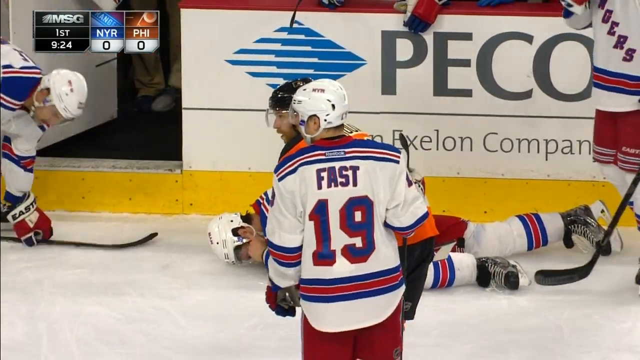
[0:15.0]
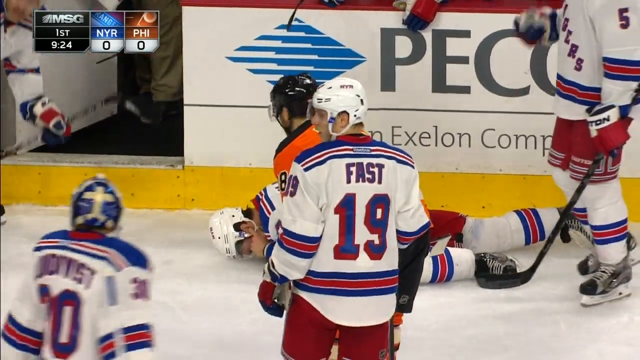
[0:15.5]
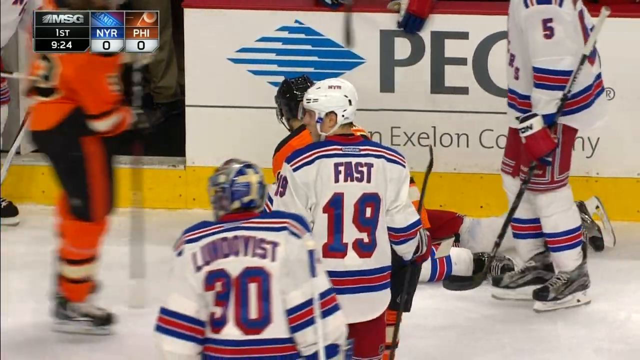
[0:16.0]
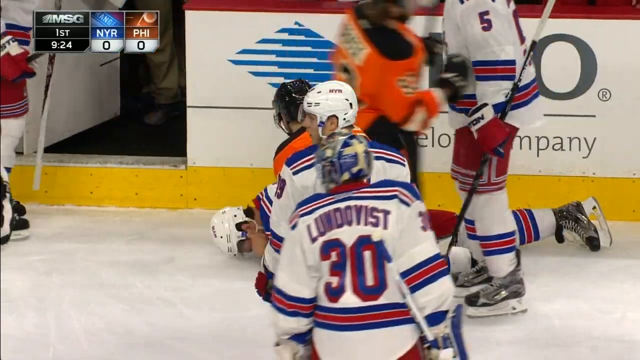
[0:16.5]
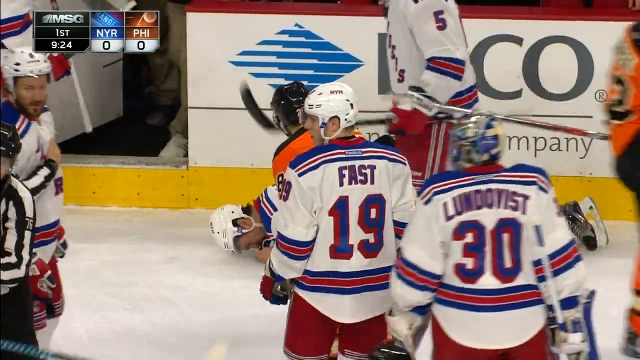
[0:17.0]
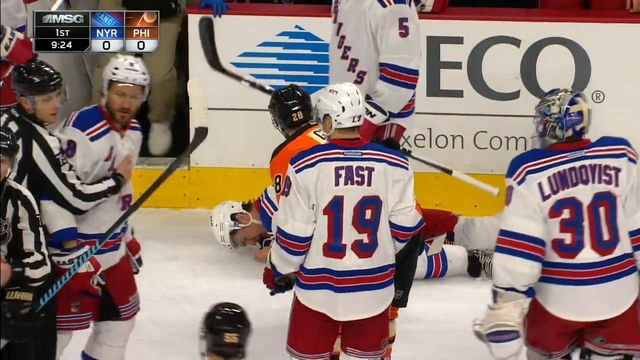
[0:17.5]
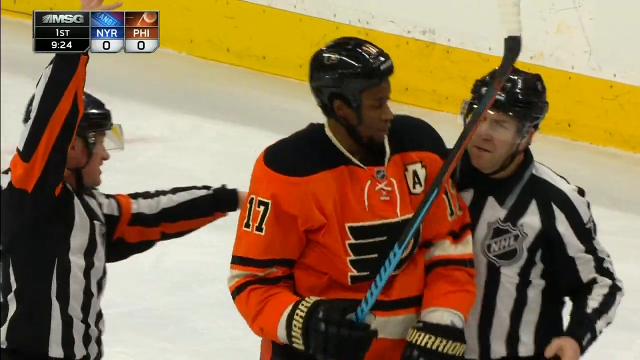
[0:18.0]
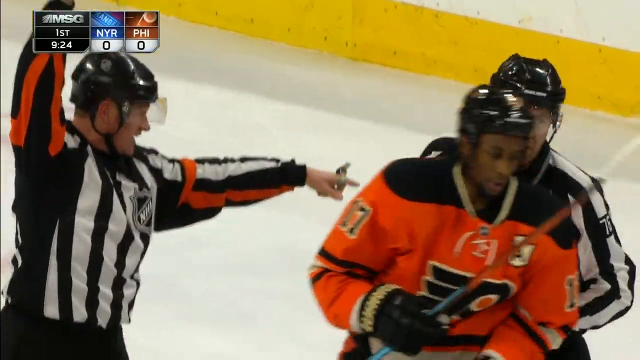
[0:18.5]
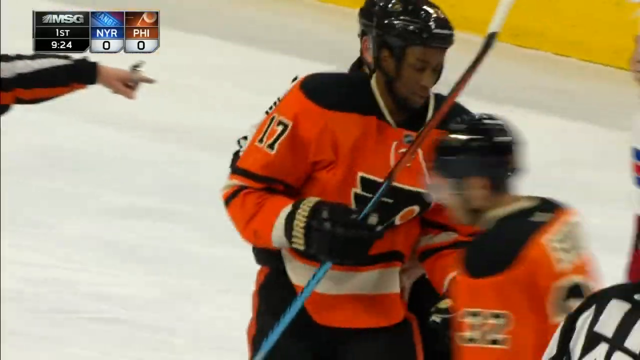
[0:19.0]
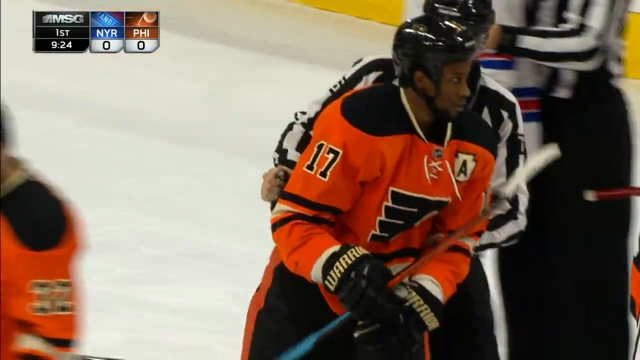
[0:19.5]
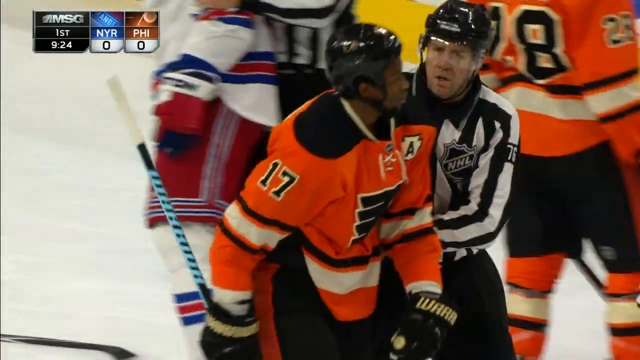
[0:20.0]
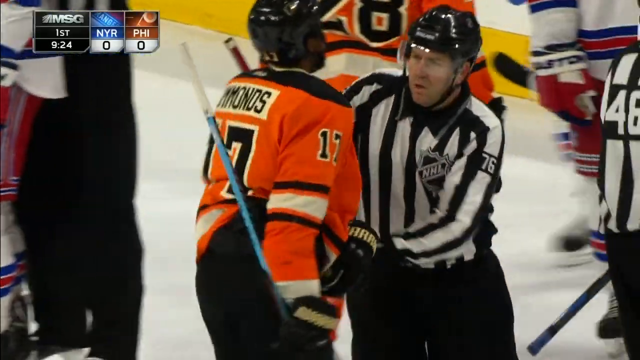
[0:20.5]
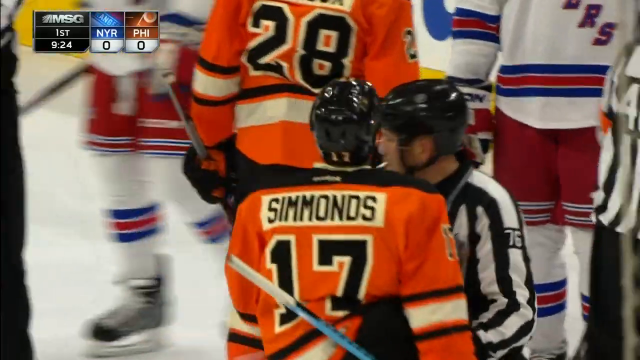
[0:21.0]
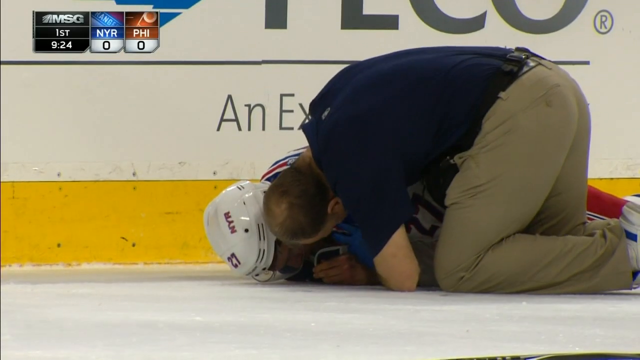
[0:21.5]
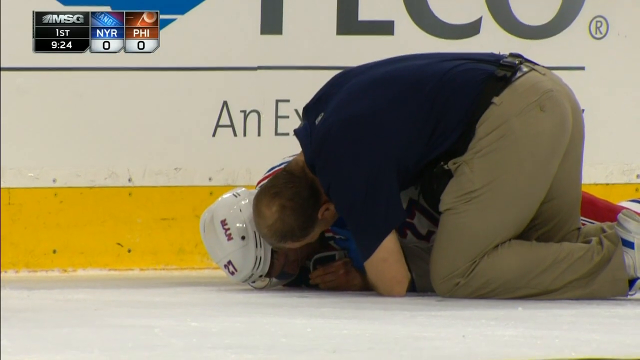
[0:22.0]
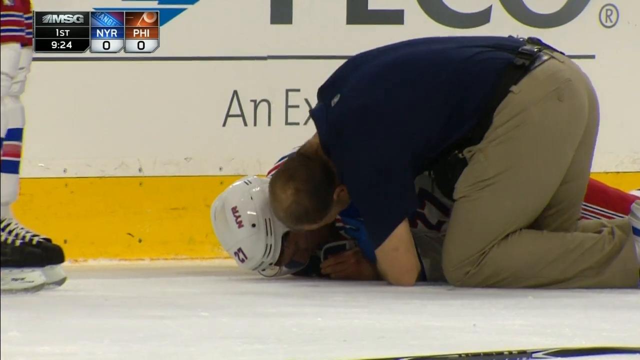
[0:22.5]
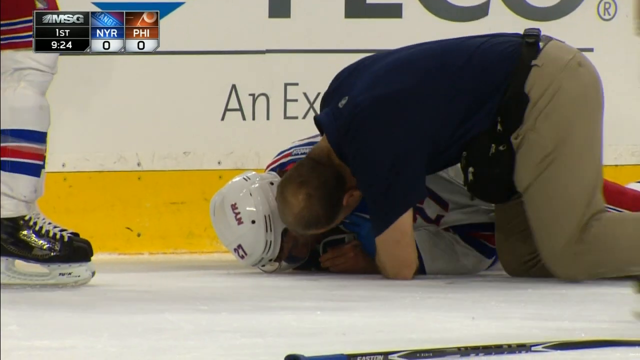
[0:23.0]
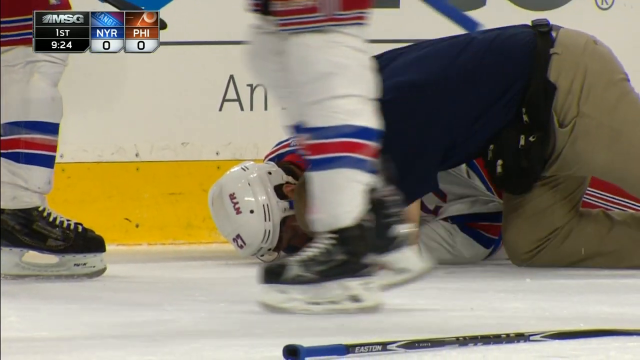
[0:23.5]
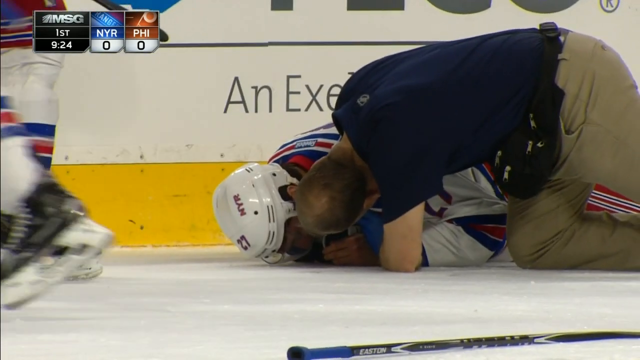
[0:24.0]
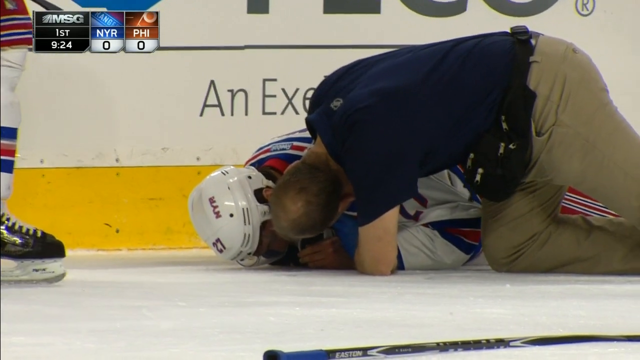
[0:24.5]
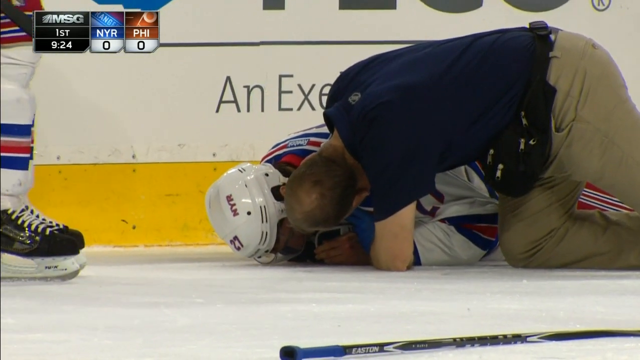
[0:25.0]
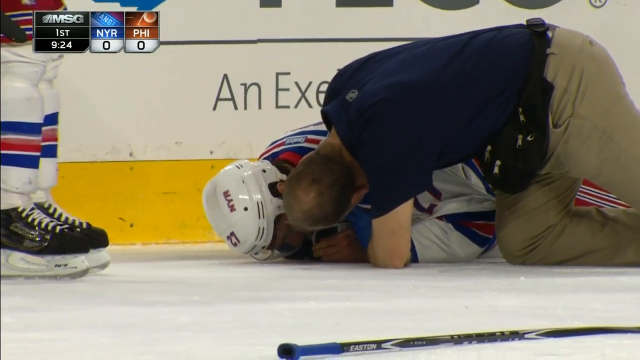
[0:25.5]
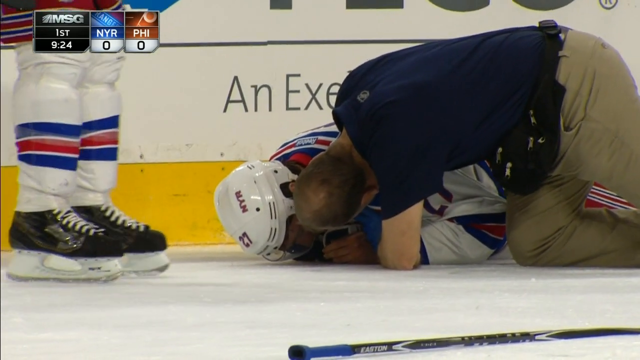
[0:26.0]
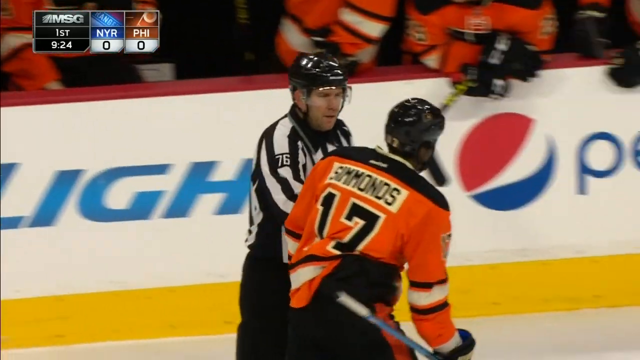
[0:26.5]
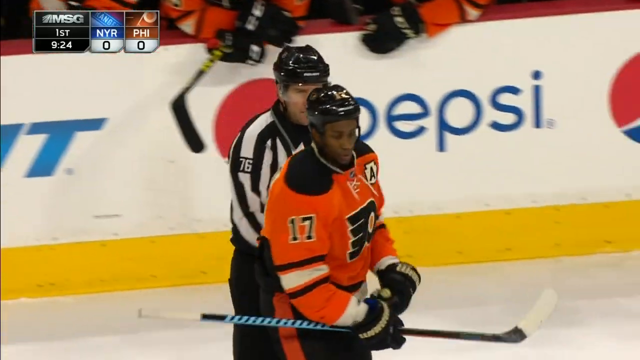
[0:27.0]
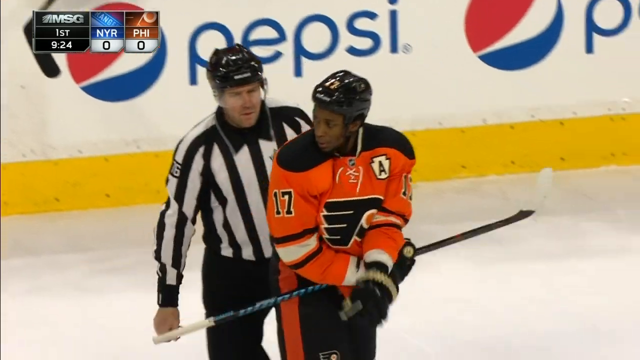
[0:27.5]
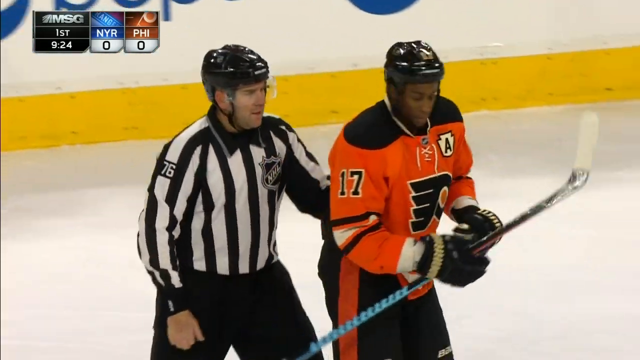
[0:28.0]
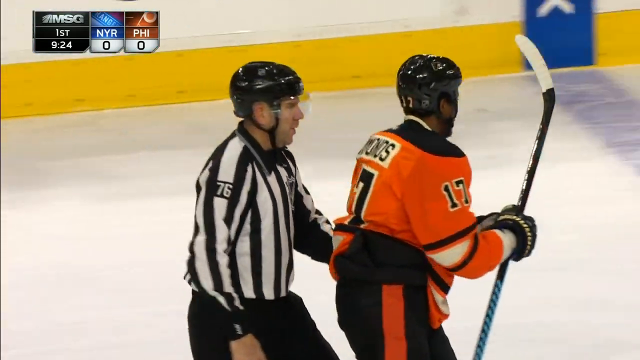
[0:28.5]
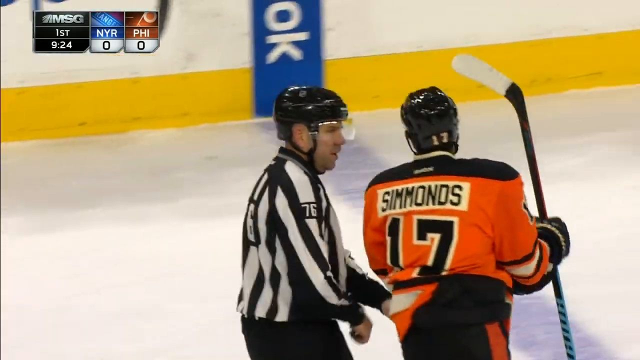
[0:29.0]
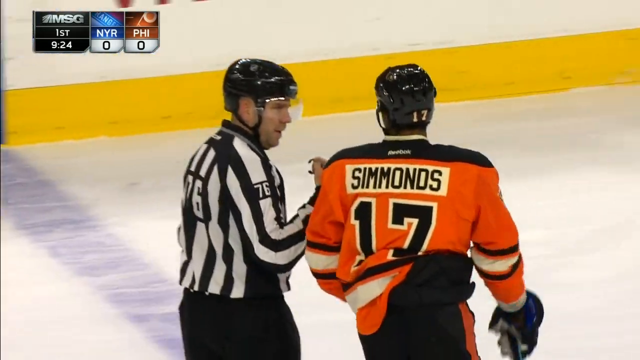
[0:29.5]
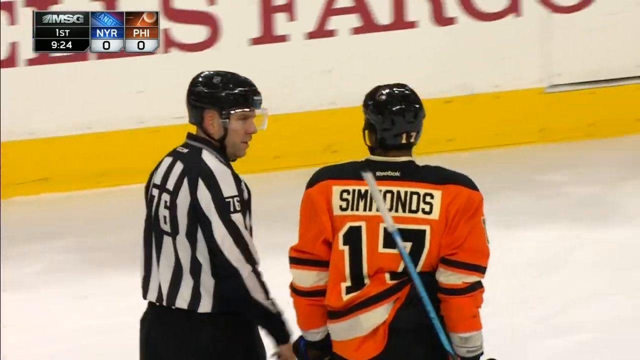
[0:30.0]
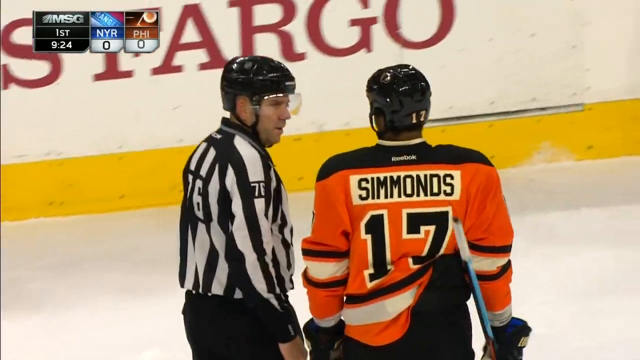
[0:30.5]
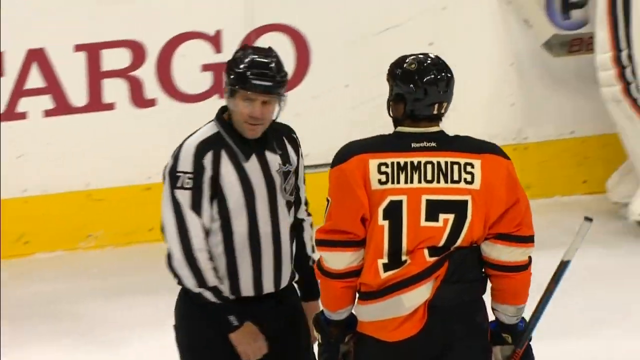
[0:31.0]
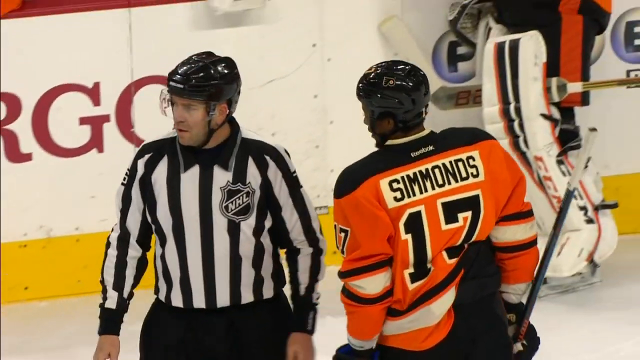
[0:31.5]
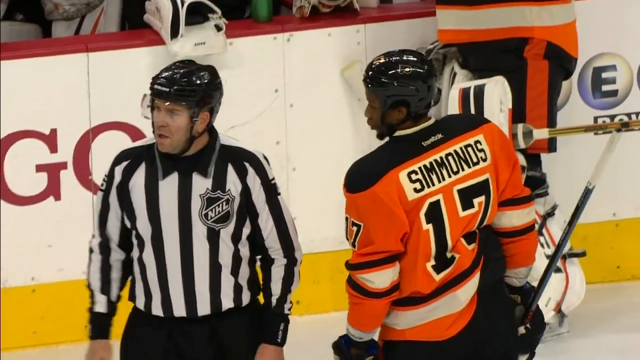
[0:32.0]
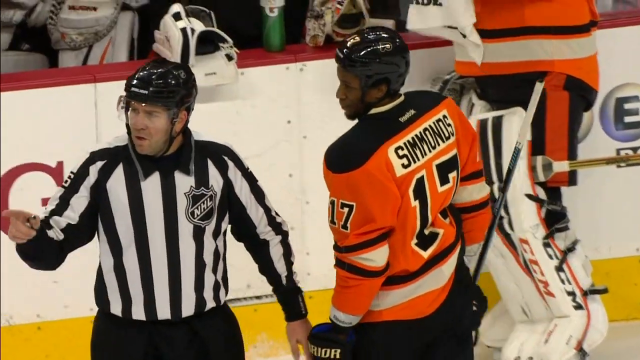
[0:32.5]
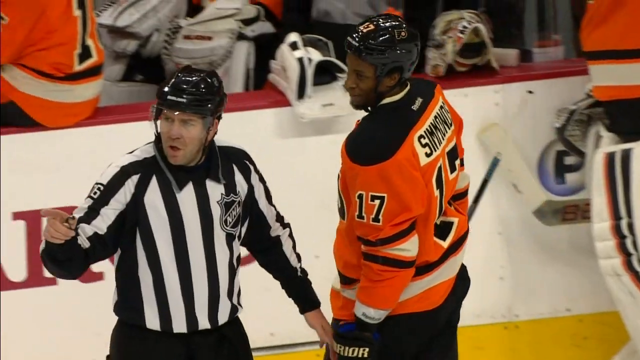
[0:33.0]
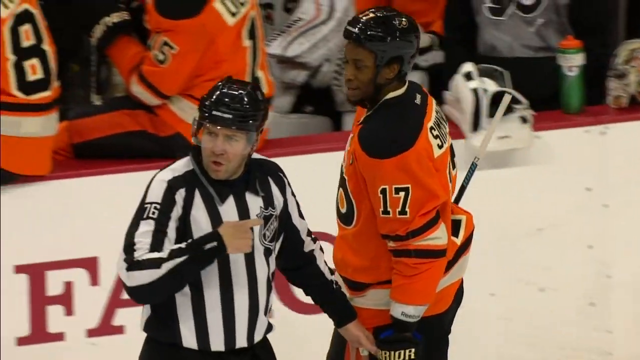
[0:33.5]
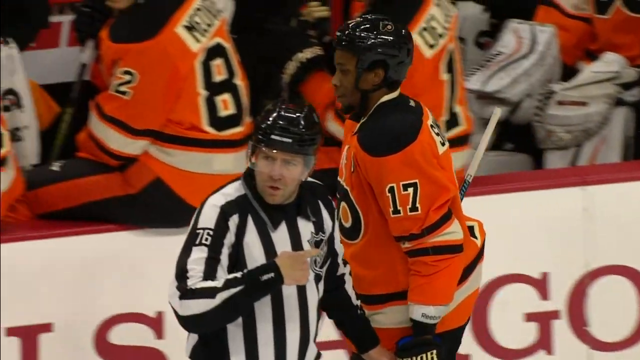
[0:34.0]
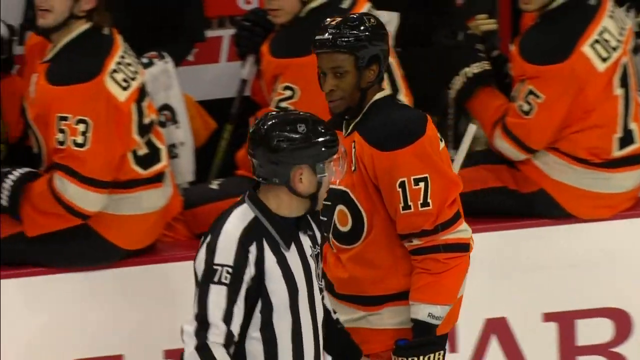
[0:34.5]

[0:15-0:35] The title reads Gotta See It, Ejected for..., with the rest not legible. The coach is down on his knees beside the hurt player, talking to him and checking whether he is okay. The player still is not getting up and keeps lying there, and it is unclear how badly he is hurt. A referee talks with Simmonds as they skate away, apparently escorting Simmonds off the rink. The game is in a timeout while the situation is sorted out. Simmonds is number 17 and wears an orange and black jersey.